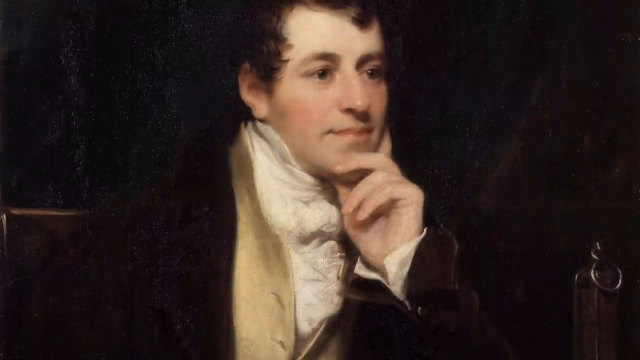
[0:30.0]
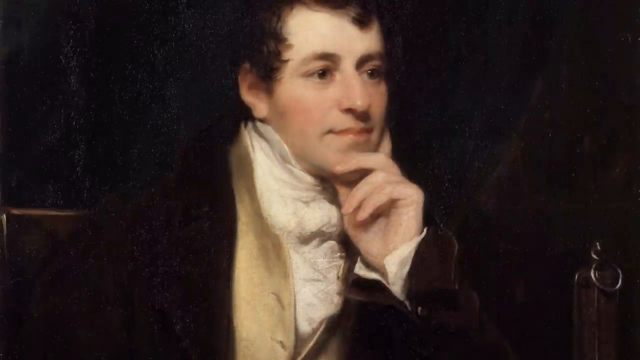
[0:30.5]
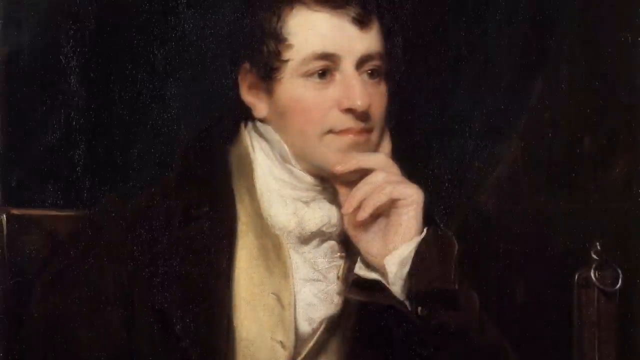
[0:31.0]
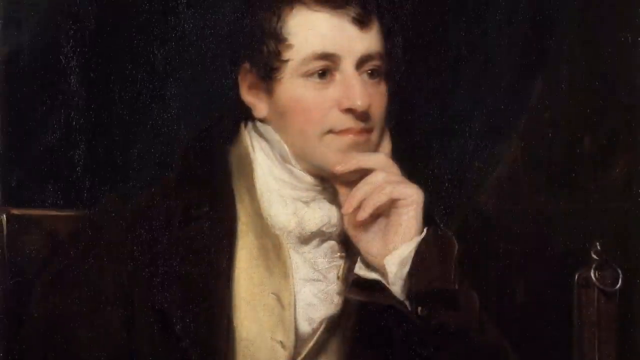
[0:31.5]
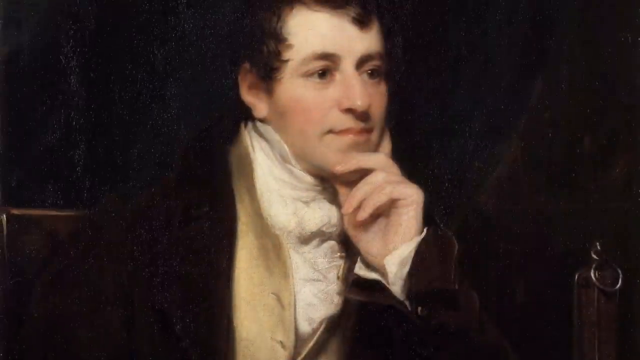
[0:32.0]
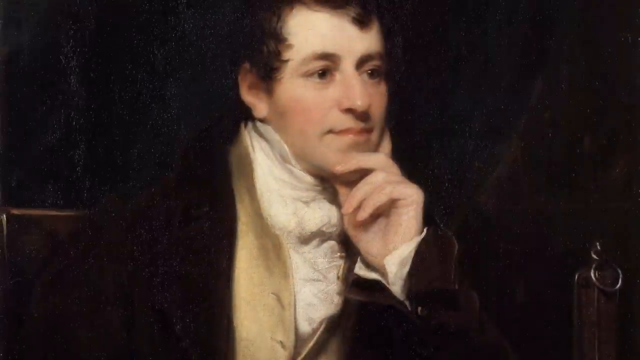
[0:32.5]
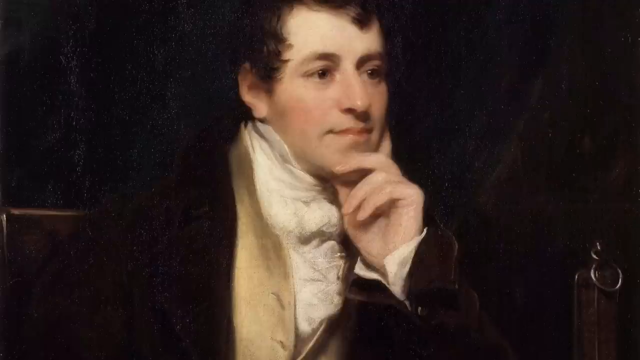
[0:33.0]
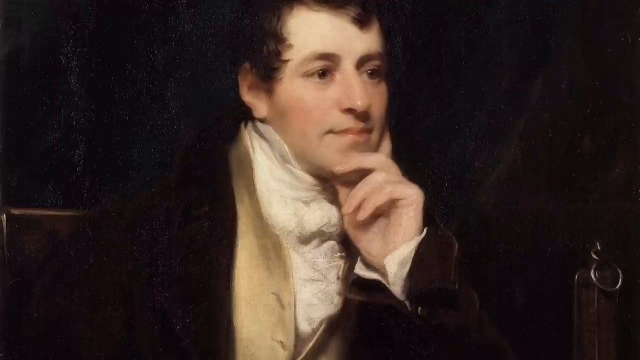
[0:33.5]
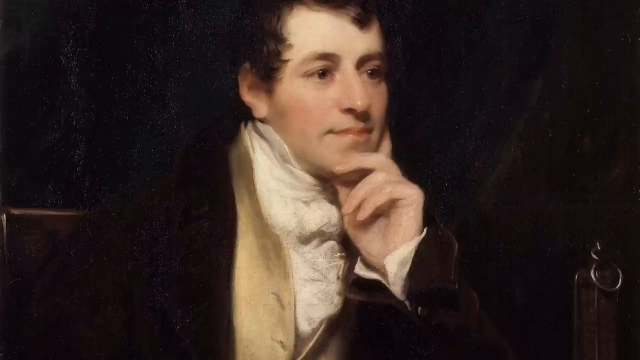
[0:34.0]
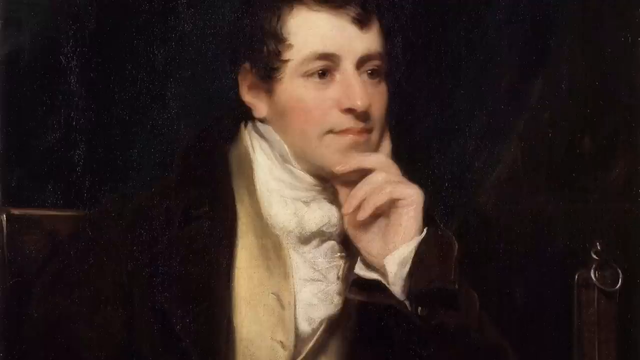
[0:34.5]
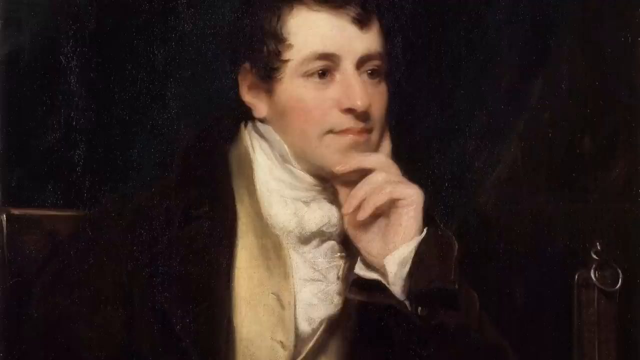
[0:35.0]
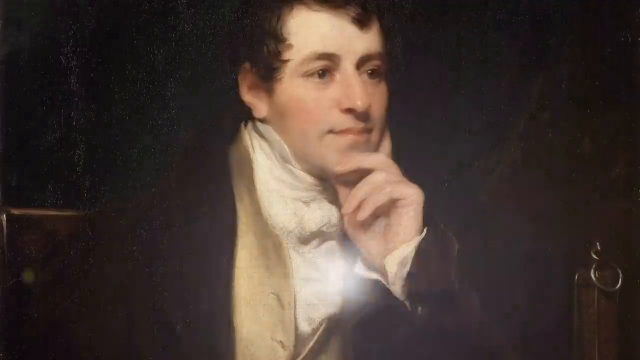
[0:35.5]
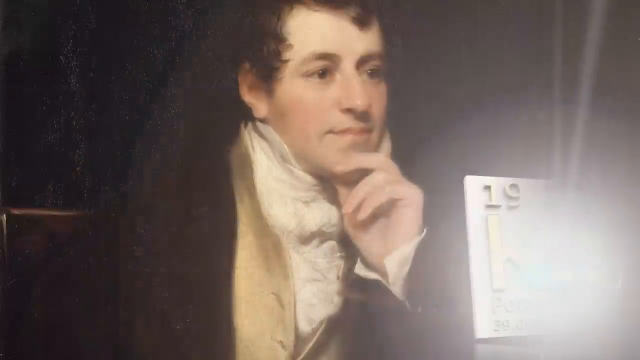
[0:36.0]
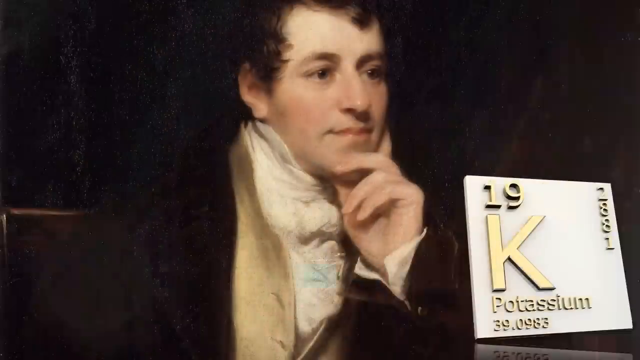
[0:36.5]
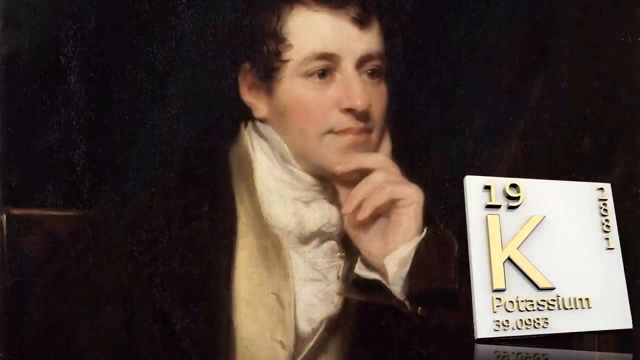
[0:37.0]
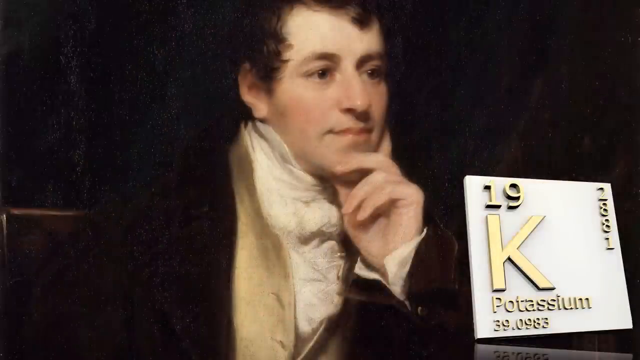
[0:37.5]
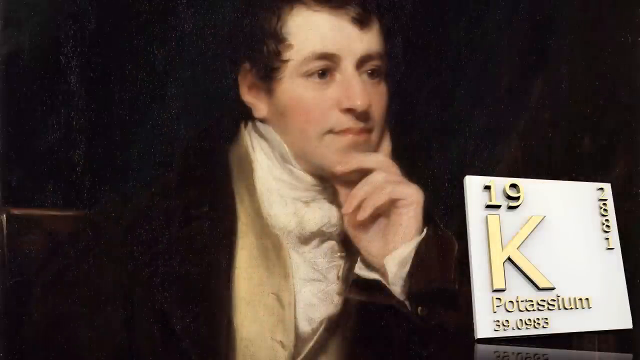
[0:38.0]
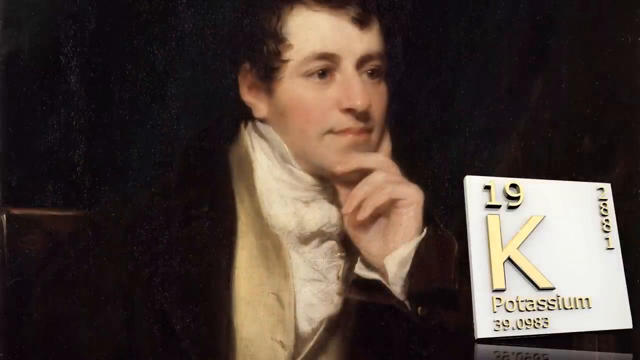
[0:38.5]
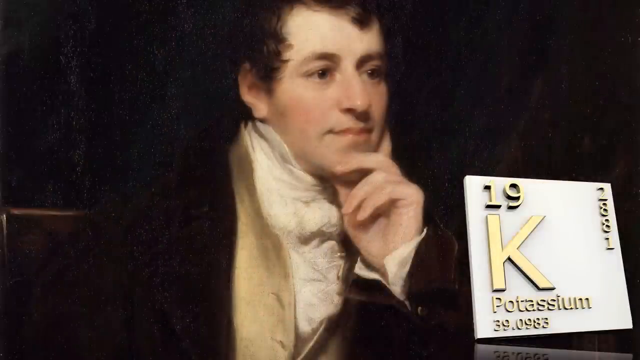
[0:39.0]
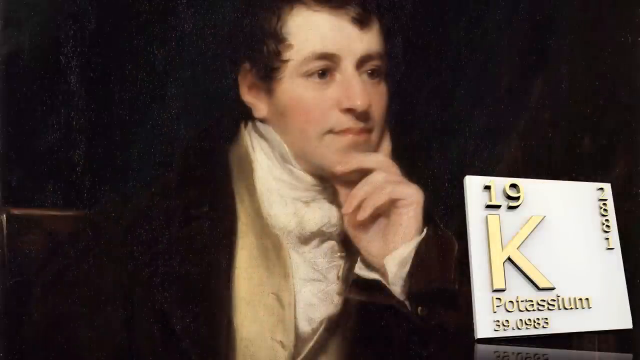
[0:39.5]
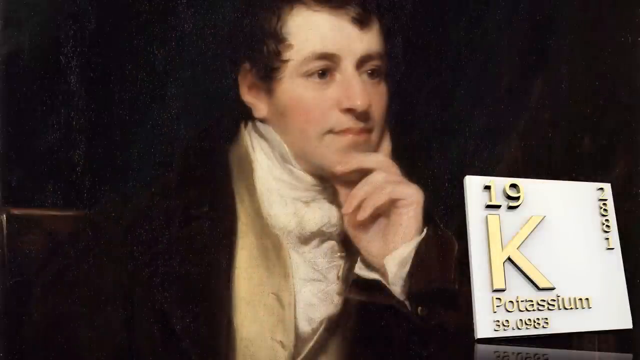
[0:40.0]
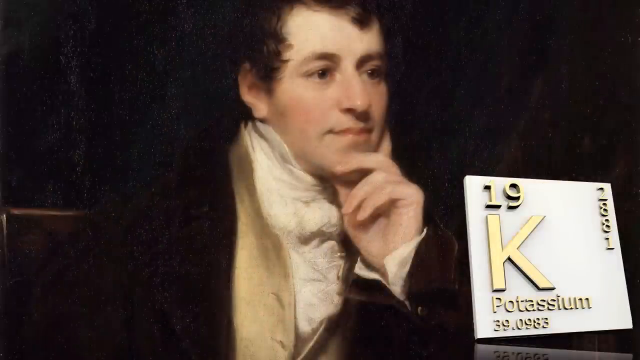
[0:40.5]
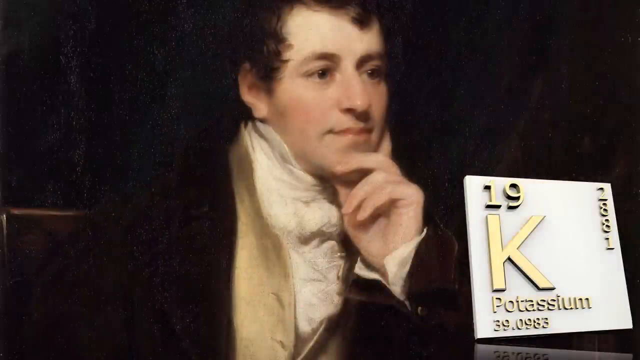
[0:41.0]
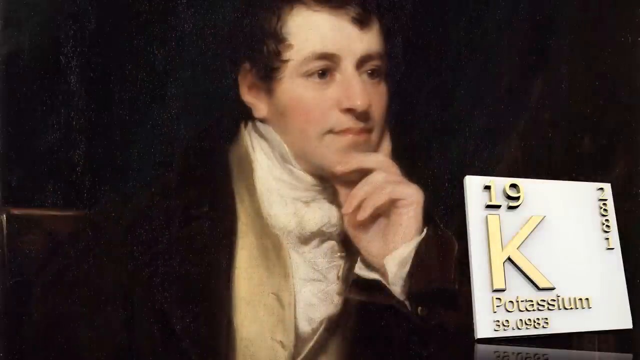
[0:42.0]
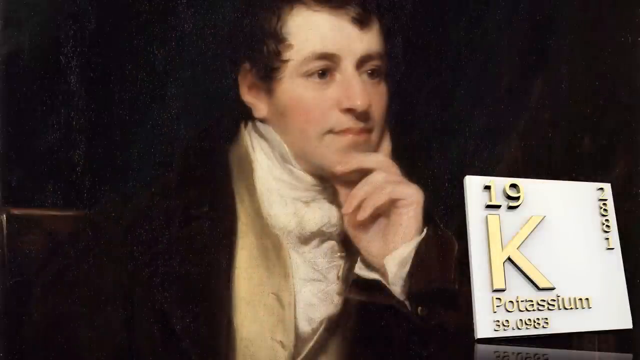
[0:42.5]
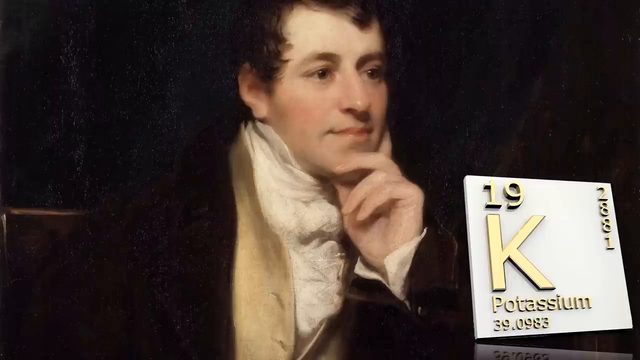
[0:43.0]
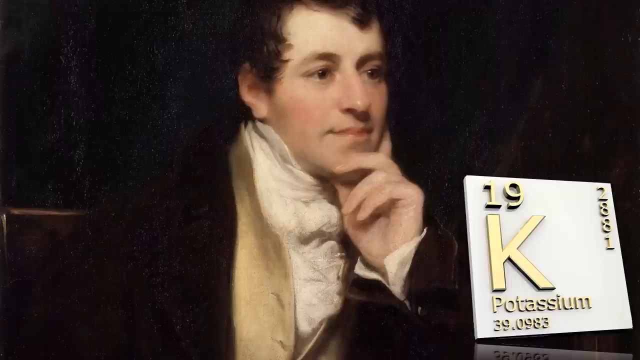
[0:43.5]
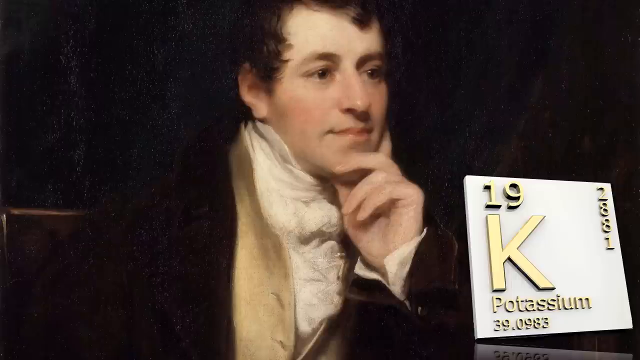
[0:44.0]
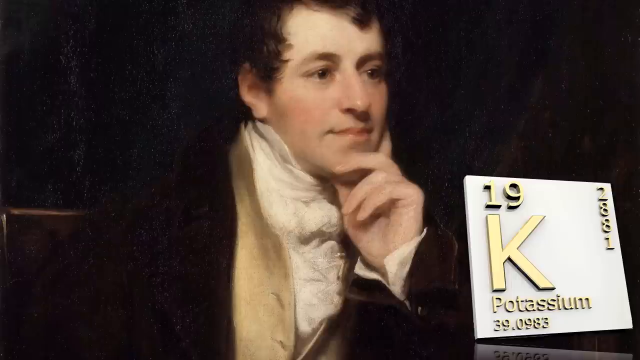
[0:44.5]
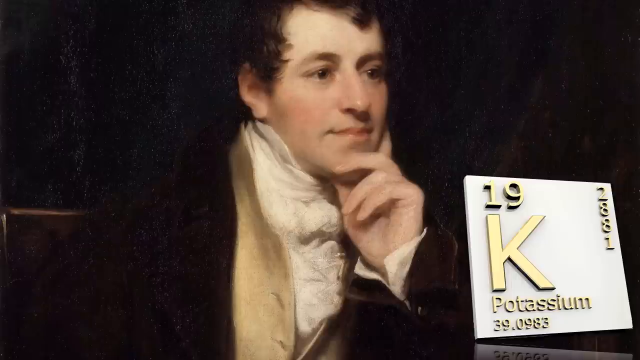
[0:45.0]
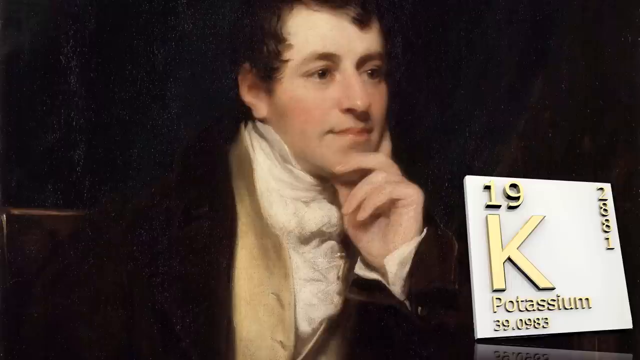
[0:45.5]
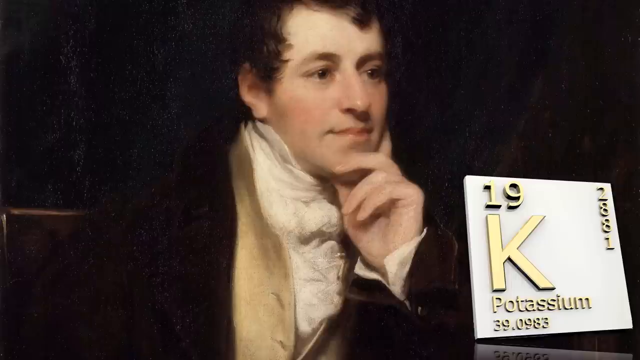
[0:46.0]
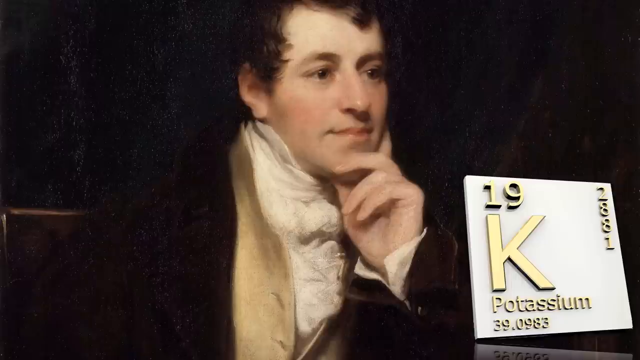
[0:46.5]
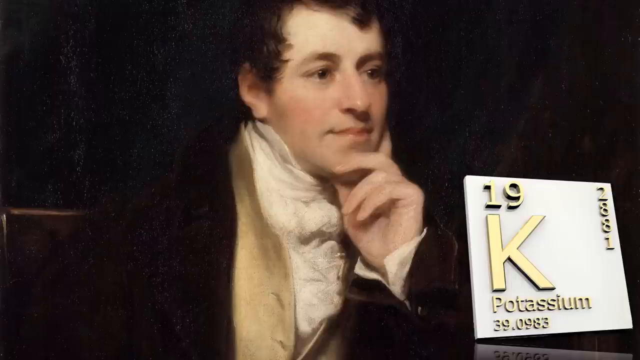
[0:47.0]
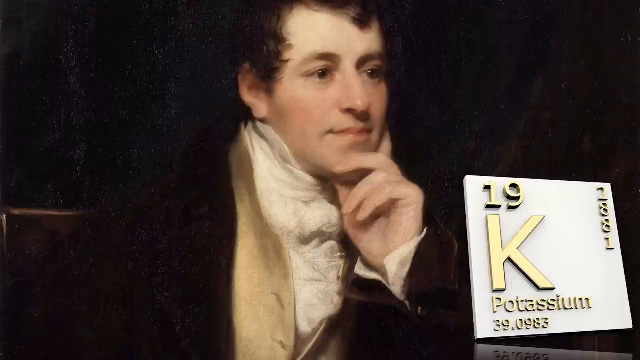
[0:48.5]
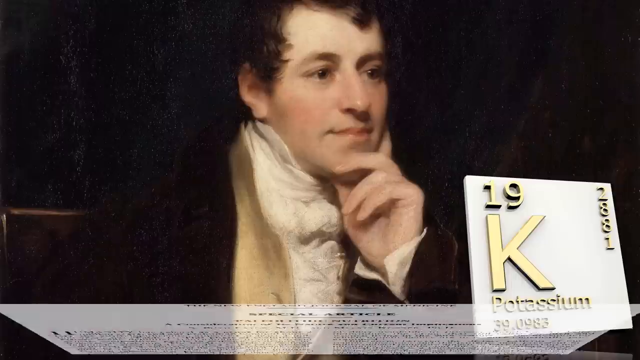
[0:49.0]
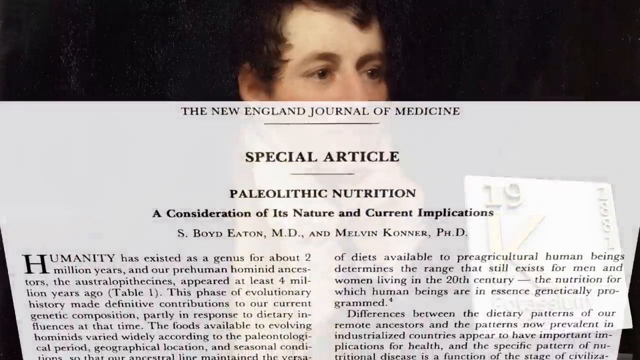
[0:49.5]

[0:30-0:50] The picture of the man sitting in deep thought remains on screen; it is very dark-toned. To the right of the man, in the lower right-hand corner, the periodic letter K for potassium pops up in gold. Above the K is a gold number 19, and below it "potassium" is written in gold; there seem to be numbers on the potassium as well, but they are not clearly visible. On the right-hand side of the photo, the numbers 2881 appear, also in gold. The screen then goes to a special article from the New England Journal of Medicine about Paleolithic nutrition, a consideration of its nature and current implications, written by S. Boyd Eaton, M.D., and Melvin Konnor, Ph.D.